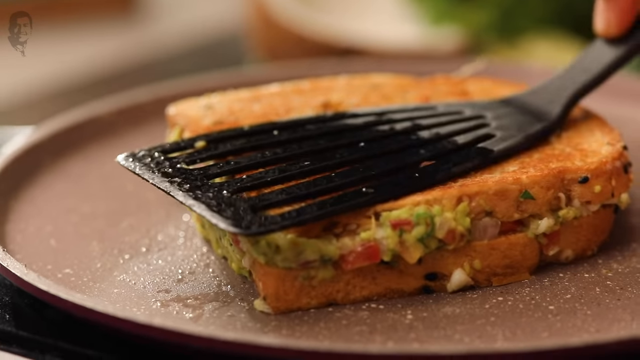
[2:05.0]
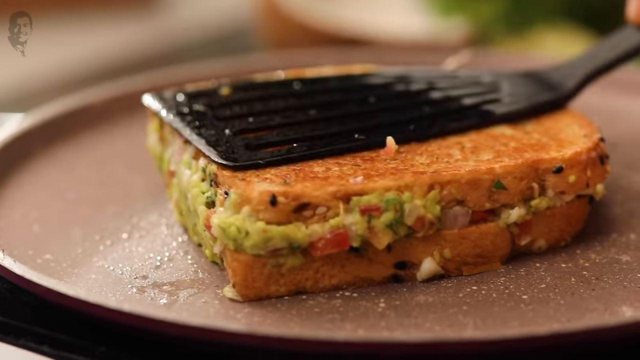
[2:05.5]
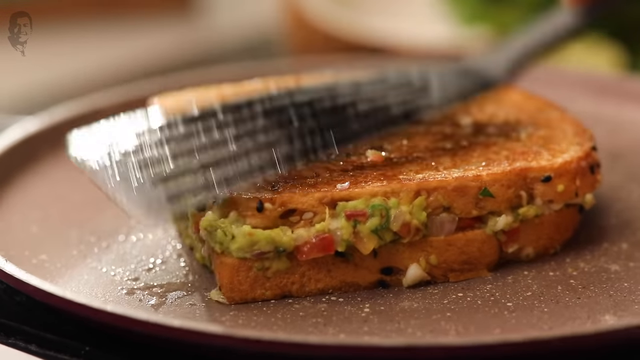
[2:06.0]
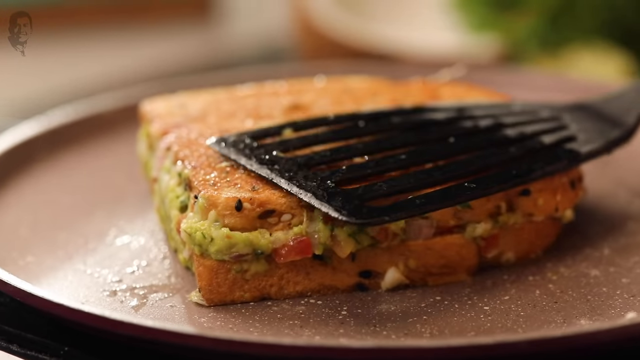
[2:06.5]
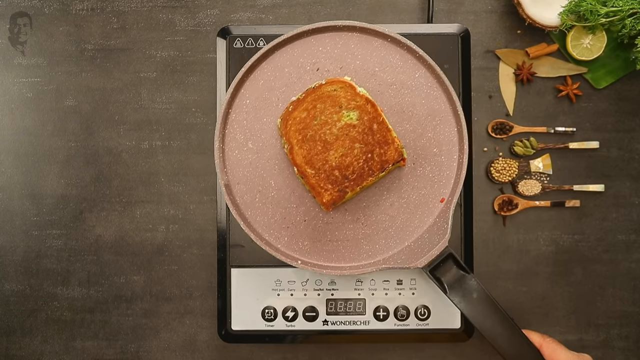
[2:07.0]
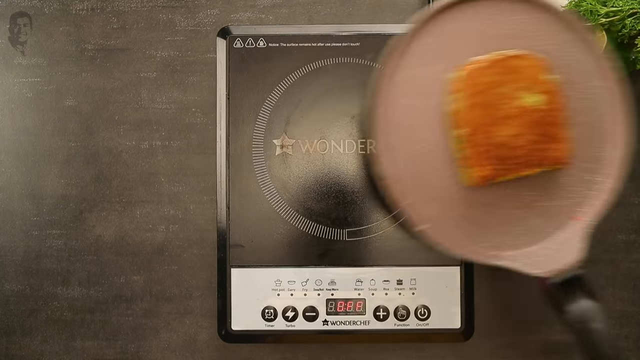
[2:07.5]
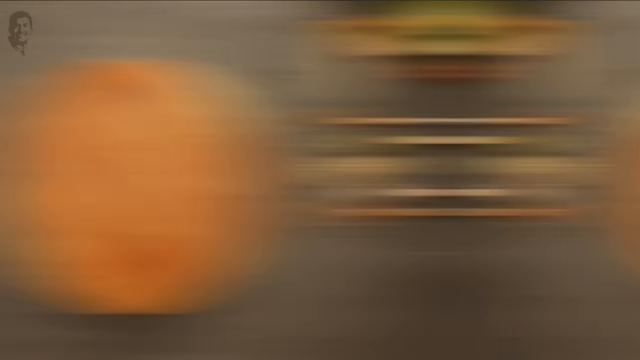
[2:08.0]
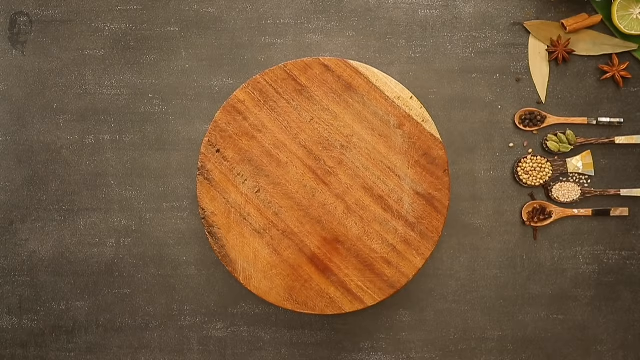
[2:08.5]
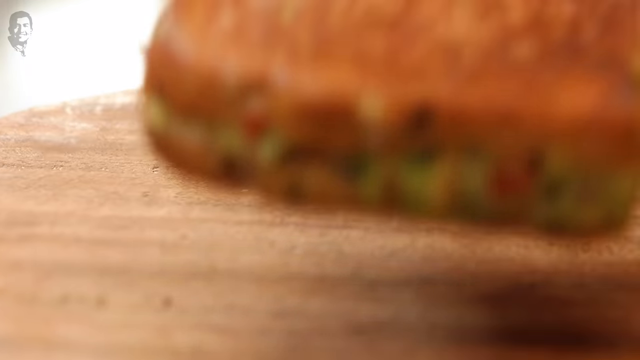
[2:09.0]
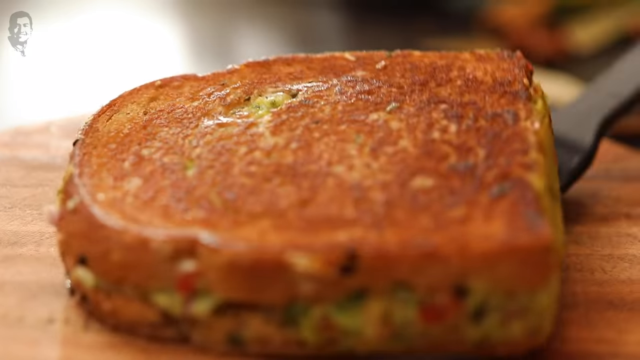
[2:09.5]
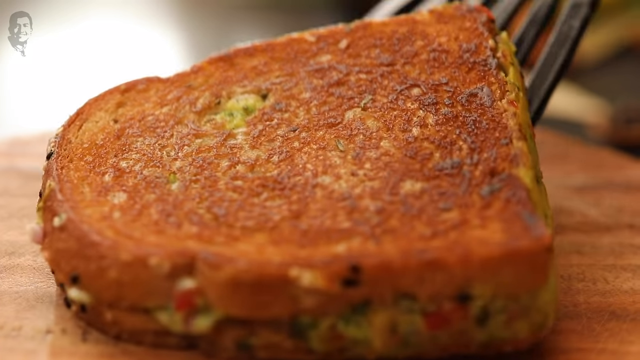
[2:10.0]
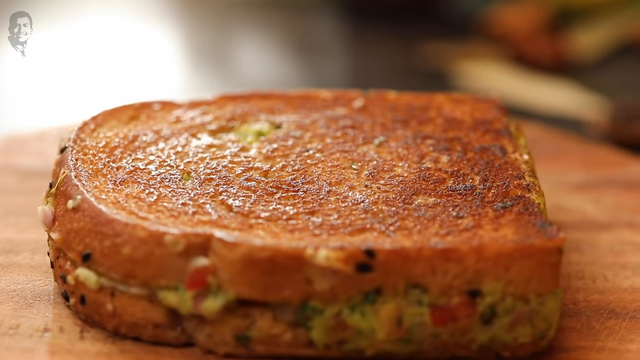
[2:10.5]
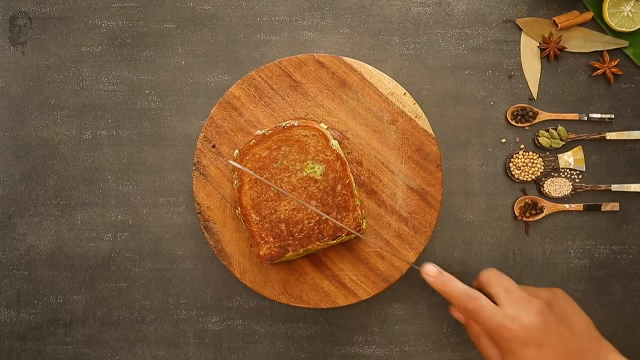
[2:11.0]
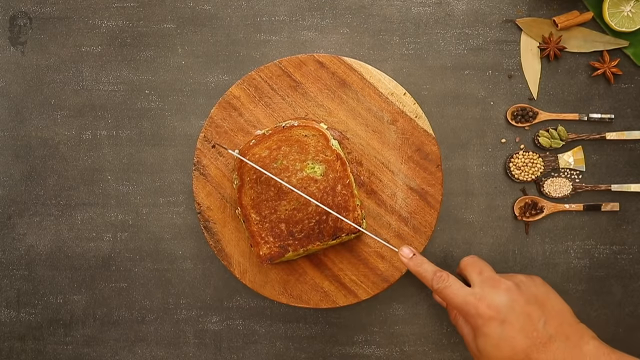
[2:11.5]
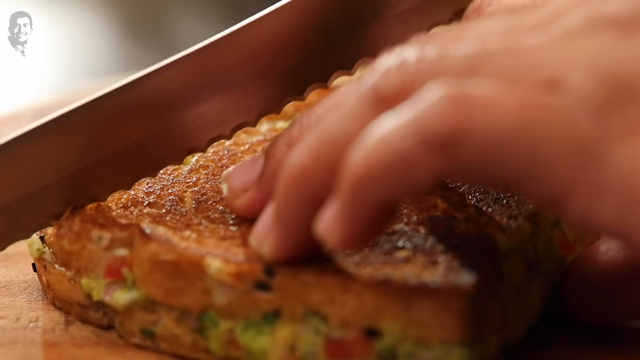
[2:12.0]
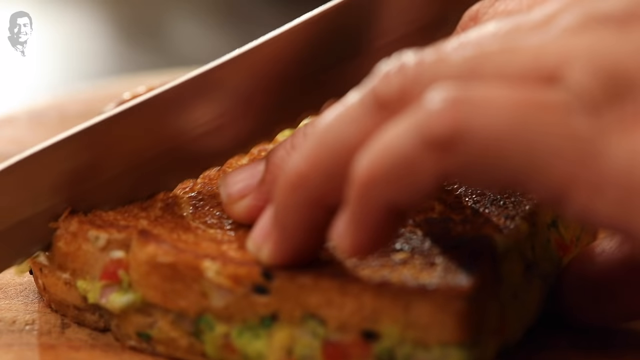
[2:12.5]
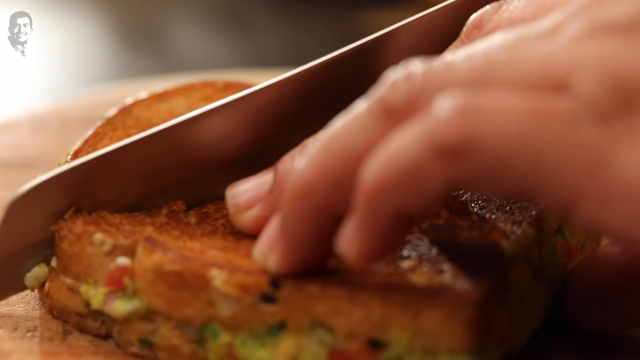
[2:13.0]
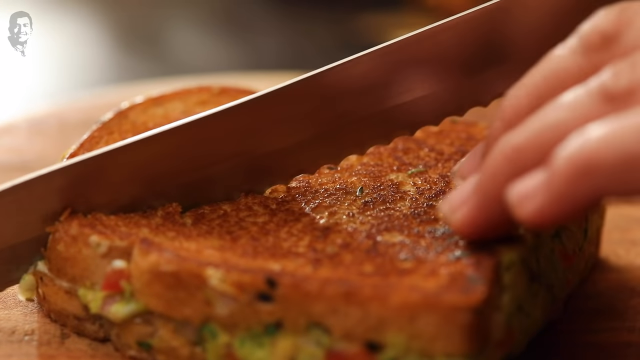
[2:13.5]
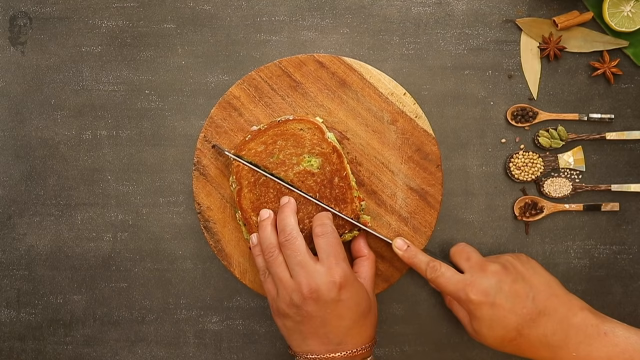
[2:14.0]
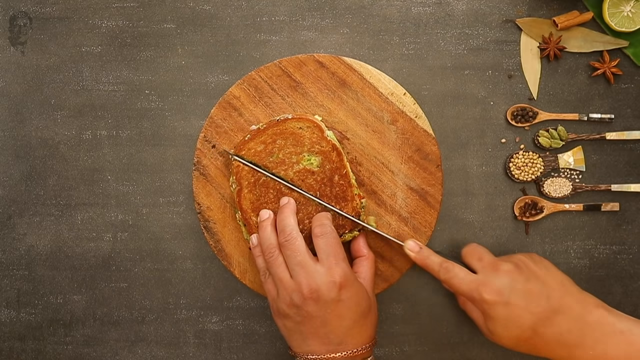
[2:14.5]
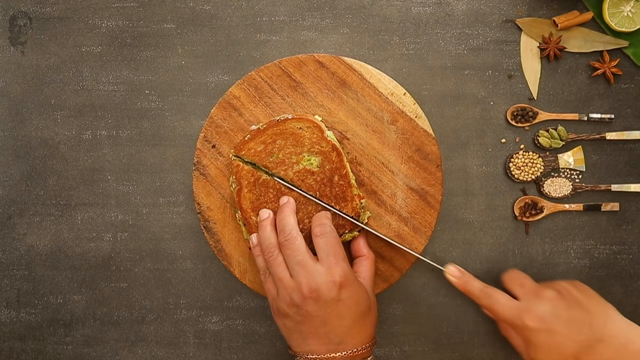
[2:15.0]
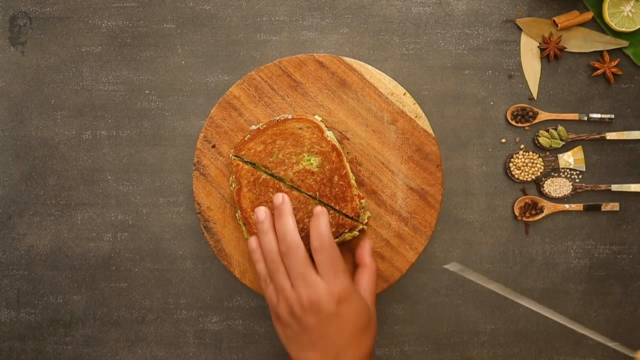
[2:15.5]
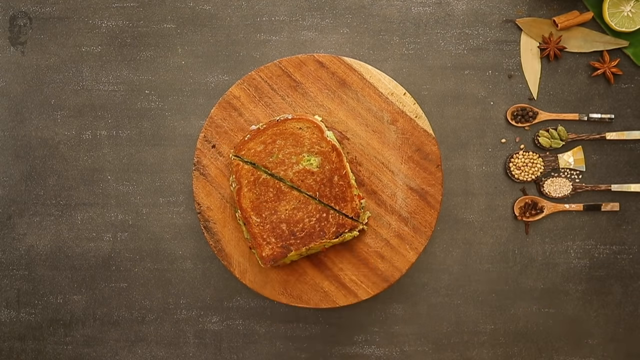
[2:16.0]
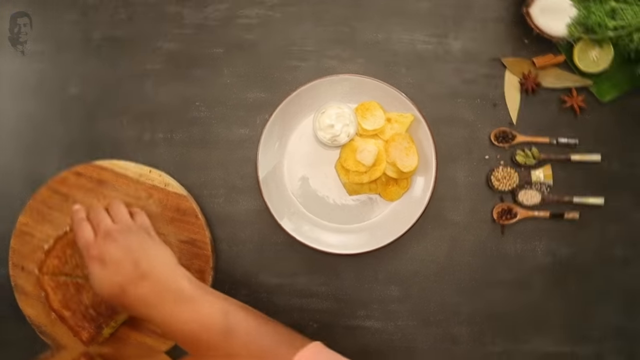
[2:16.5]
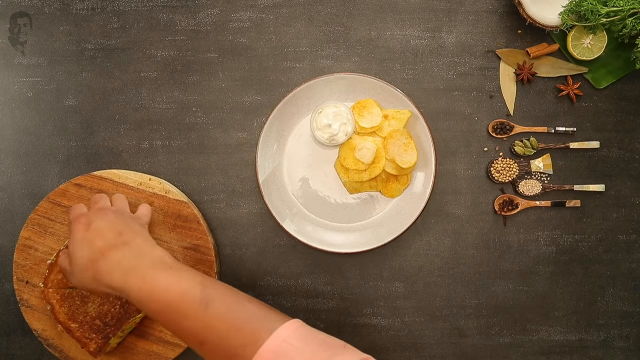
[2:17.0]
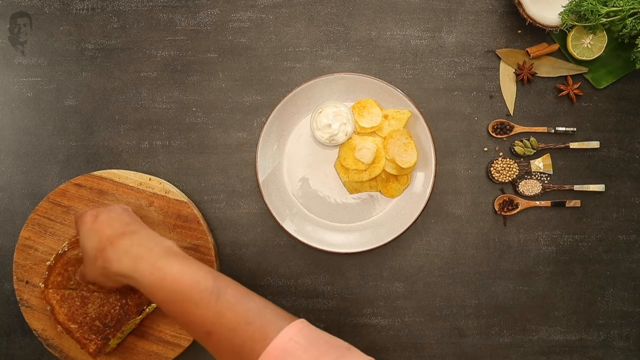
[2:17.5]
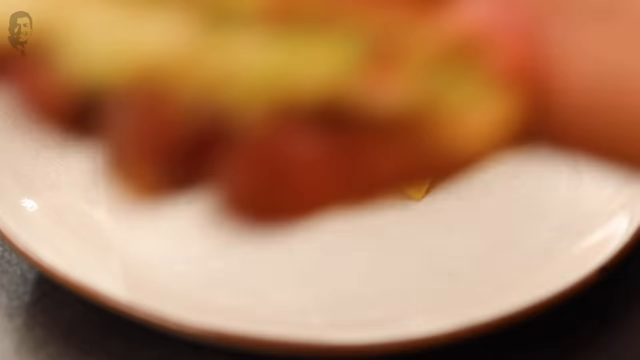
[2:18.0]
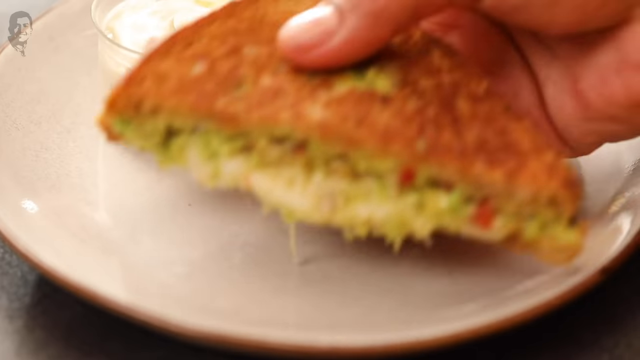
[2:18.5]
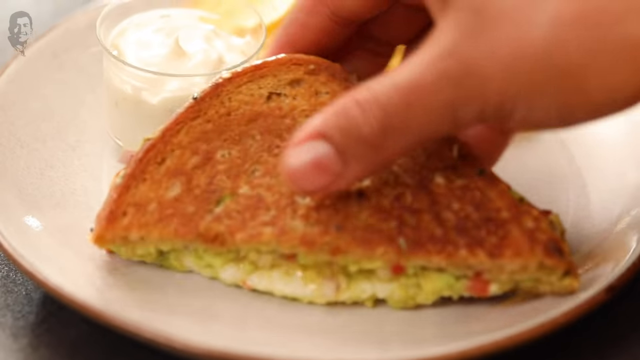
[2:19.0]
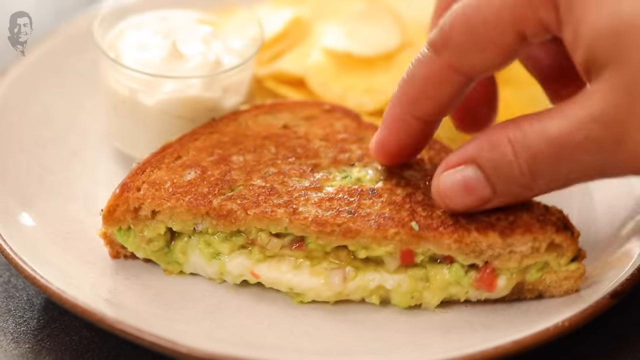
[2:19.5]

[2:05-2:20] The cheesy avocado toast looks about ready. The woman takes the whole small frying pan off the hot plate and puts the sandwich on the round wood cutting board. She cuts it diagonally with a long knife. After the cut, the camera spins the picture. A white plate waits with potato chips and a small cup of a white creamy substance, probably more butter. She picks up one half of the sandwich and puts it on the plate with the chips and the creamy white stuff, looking like she might be ready to serve it. Only one half goes on the white plate.